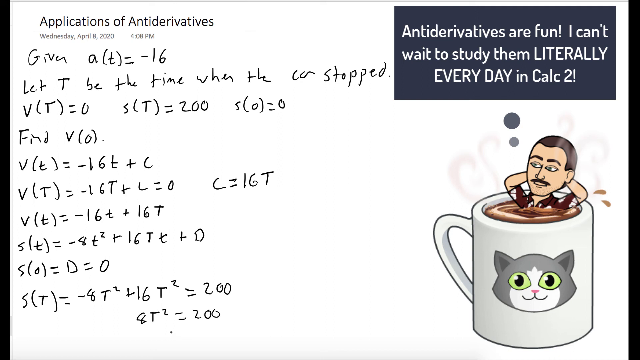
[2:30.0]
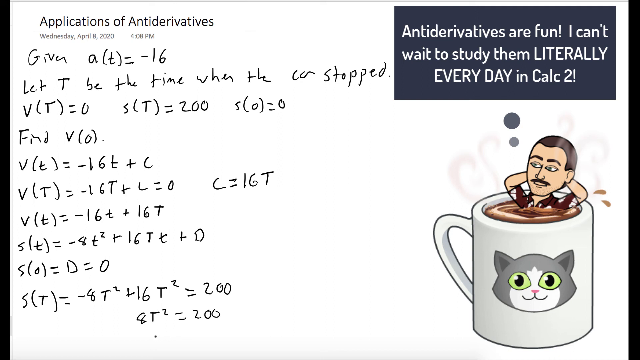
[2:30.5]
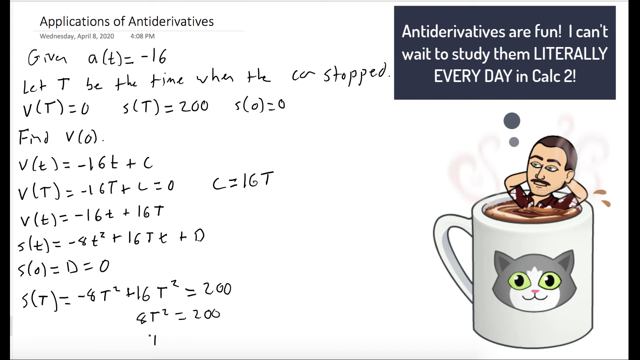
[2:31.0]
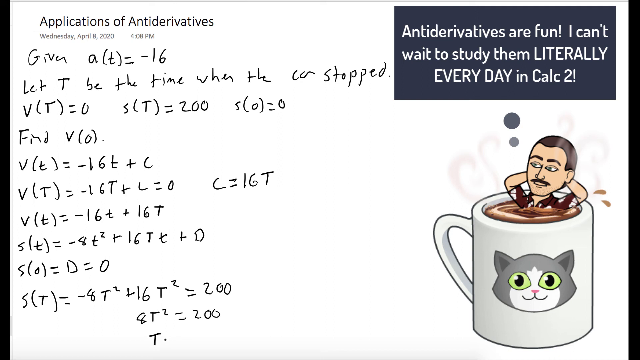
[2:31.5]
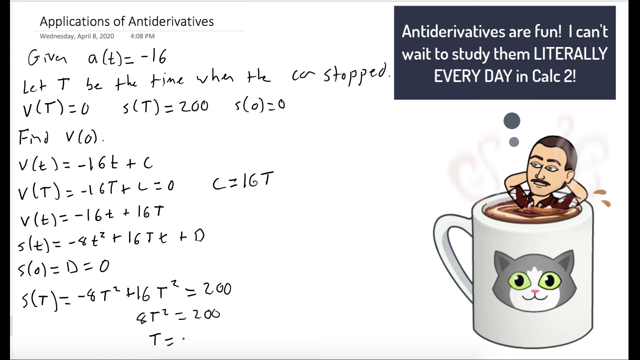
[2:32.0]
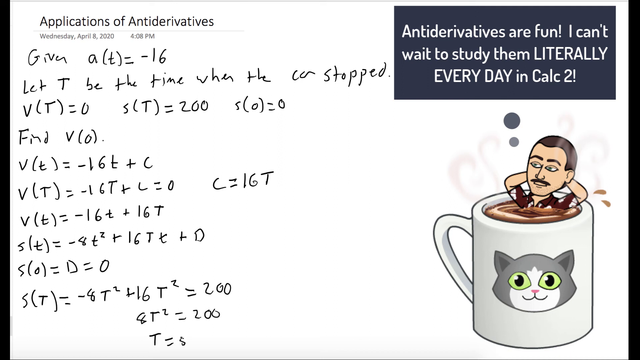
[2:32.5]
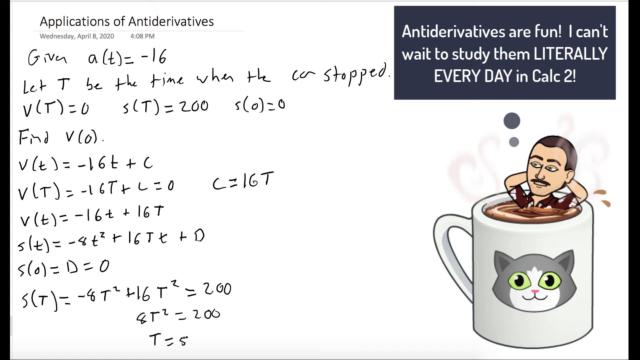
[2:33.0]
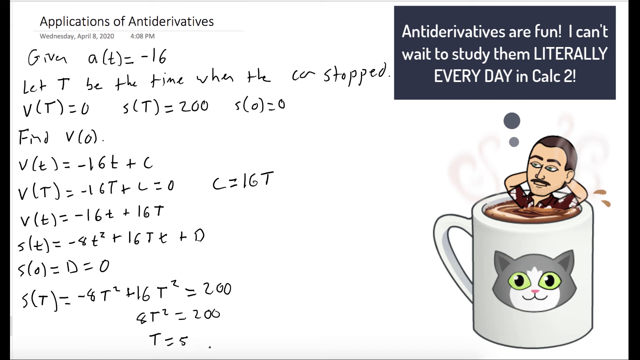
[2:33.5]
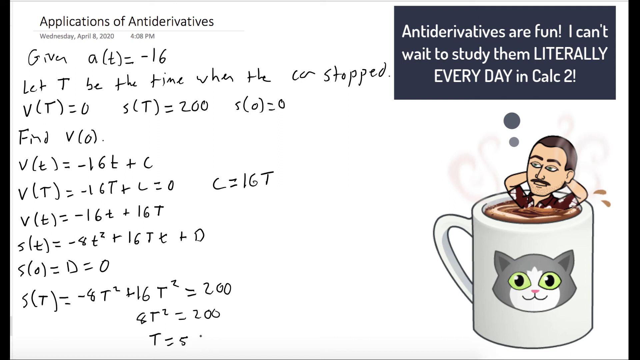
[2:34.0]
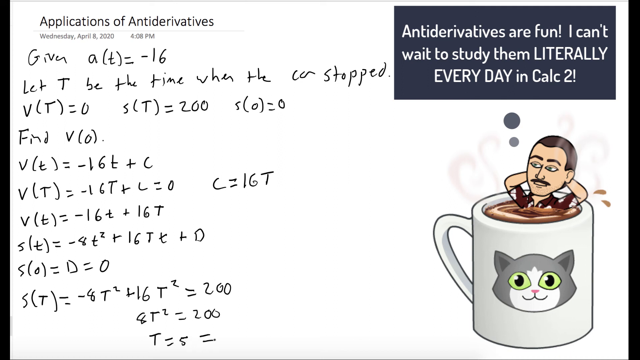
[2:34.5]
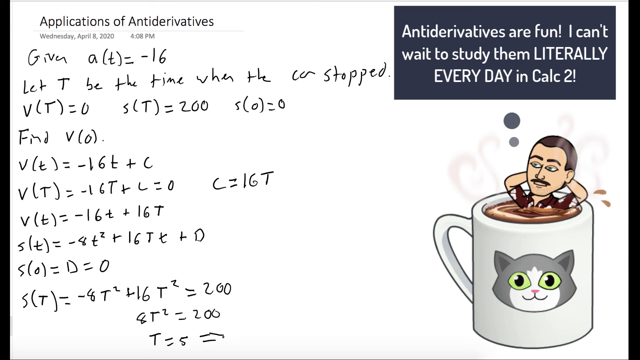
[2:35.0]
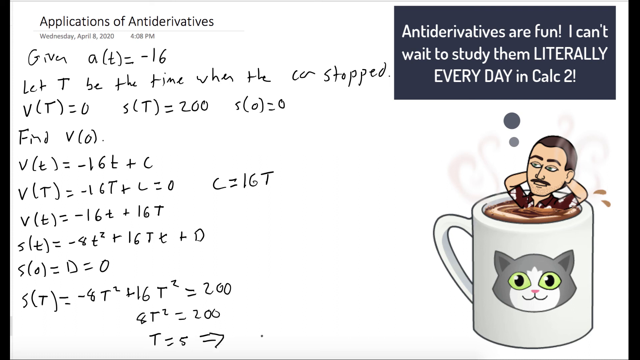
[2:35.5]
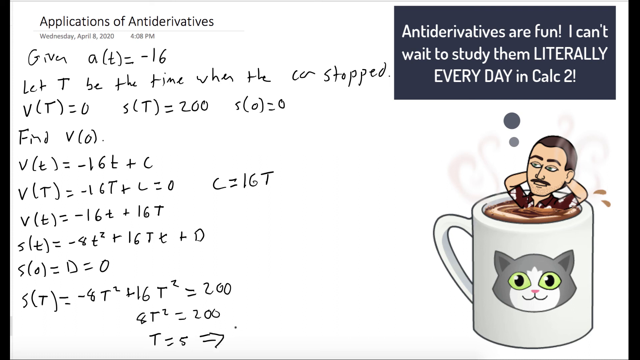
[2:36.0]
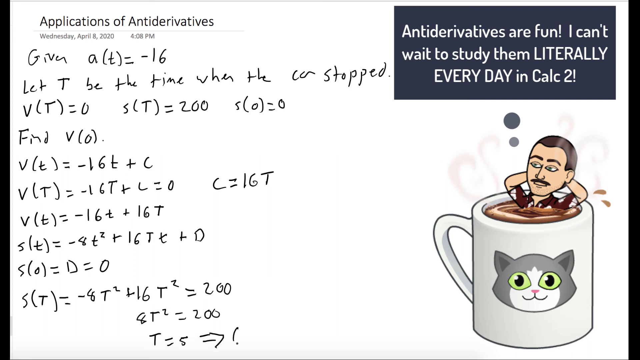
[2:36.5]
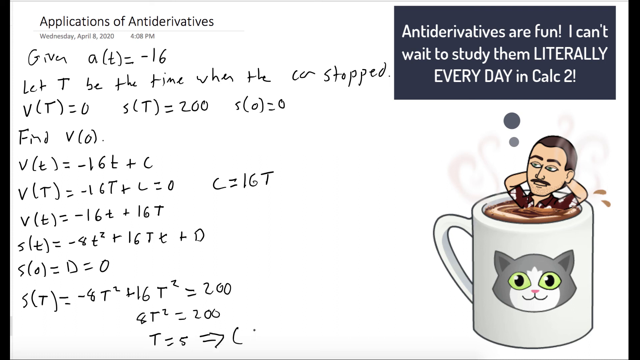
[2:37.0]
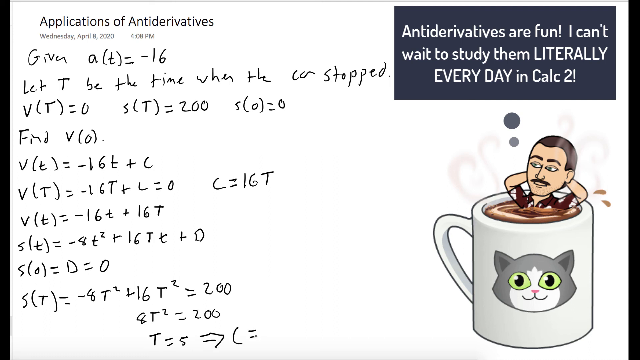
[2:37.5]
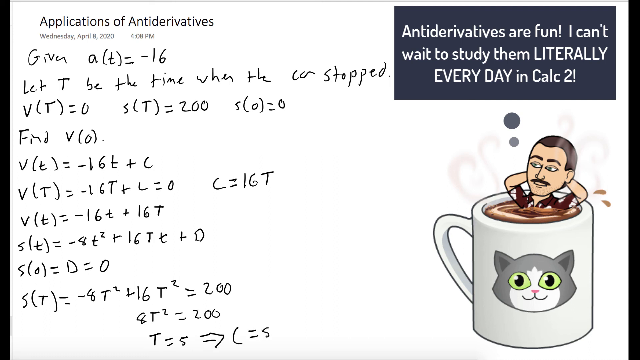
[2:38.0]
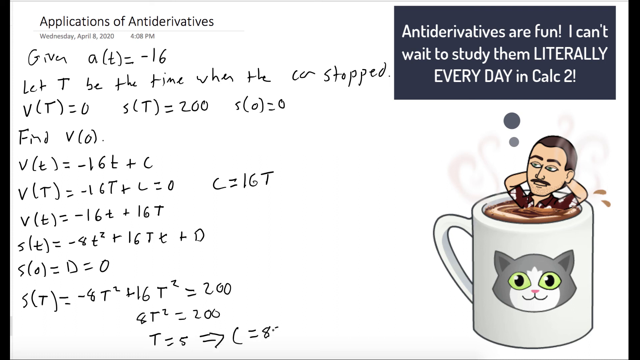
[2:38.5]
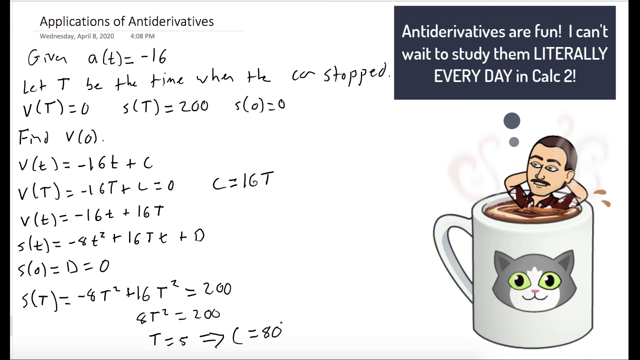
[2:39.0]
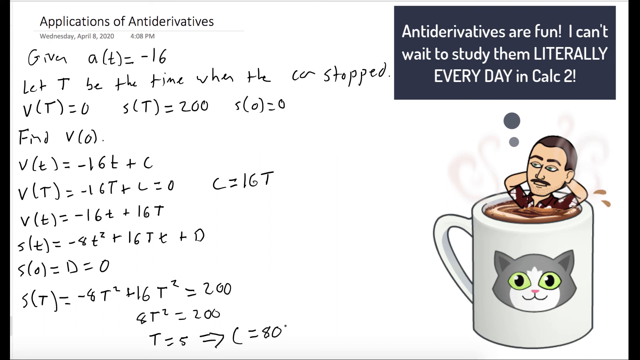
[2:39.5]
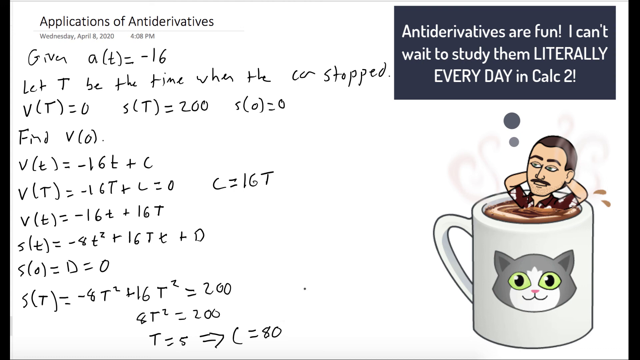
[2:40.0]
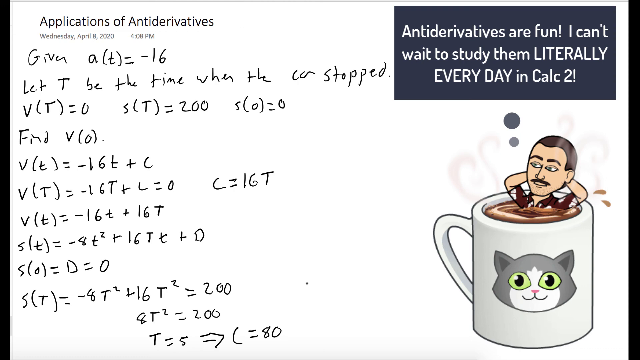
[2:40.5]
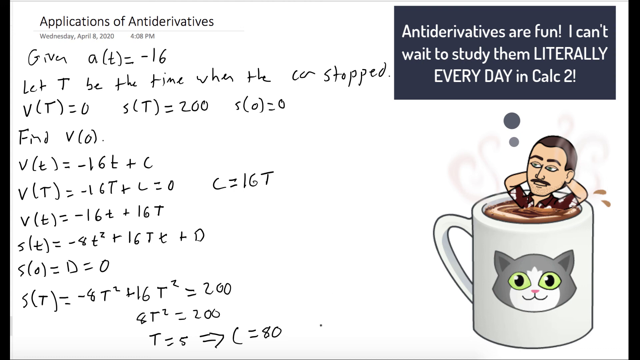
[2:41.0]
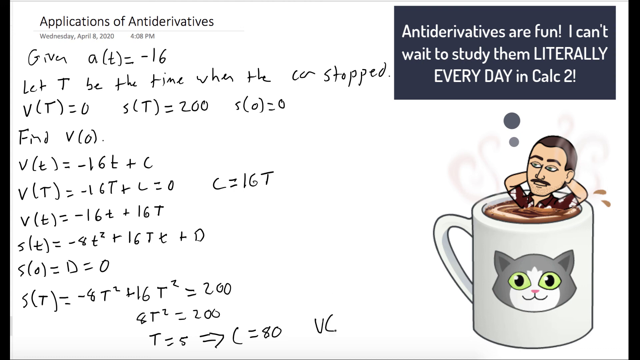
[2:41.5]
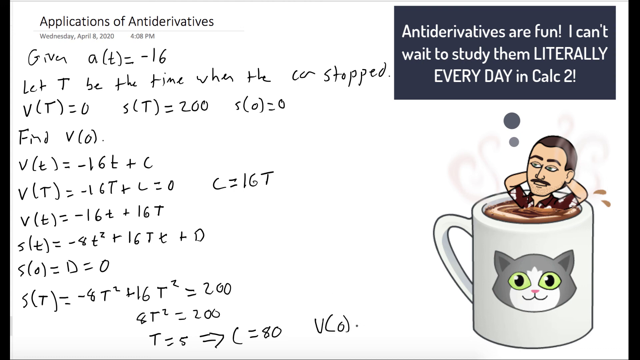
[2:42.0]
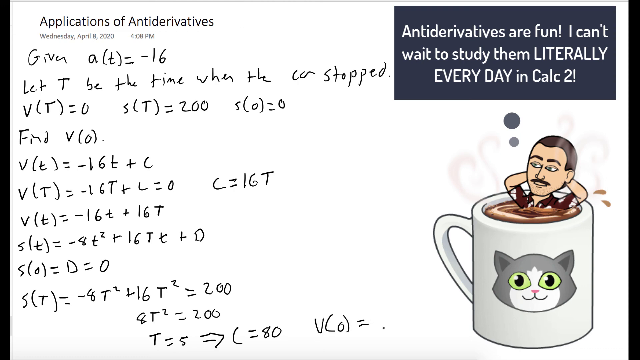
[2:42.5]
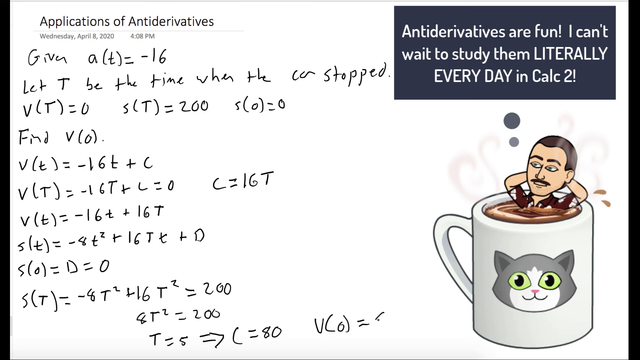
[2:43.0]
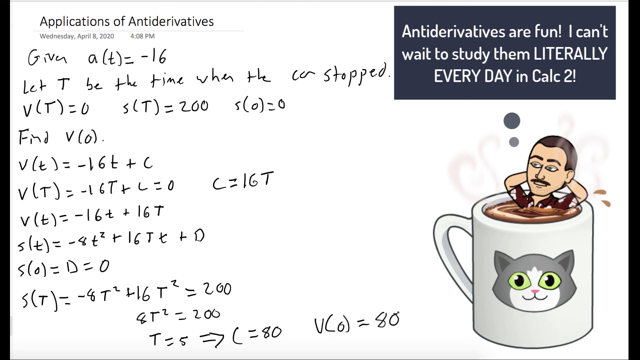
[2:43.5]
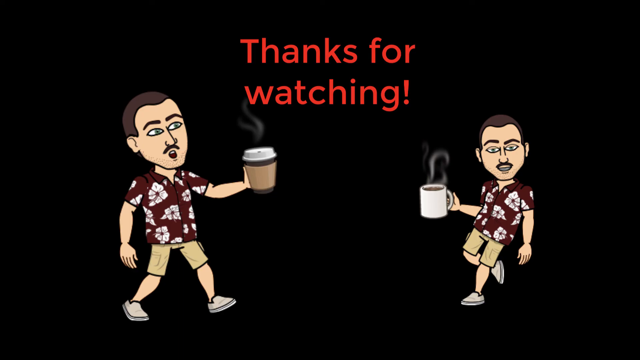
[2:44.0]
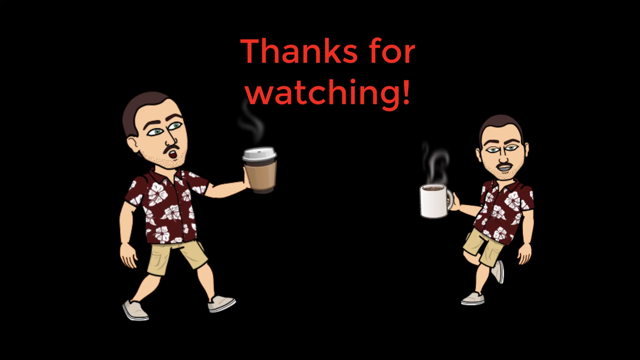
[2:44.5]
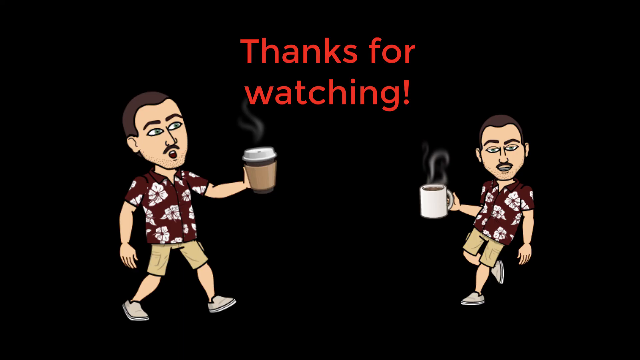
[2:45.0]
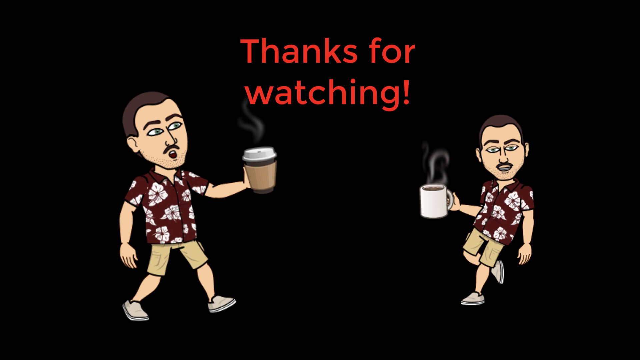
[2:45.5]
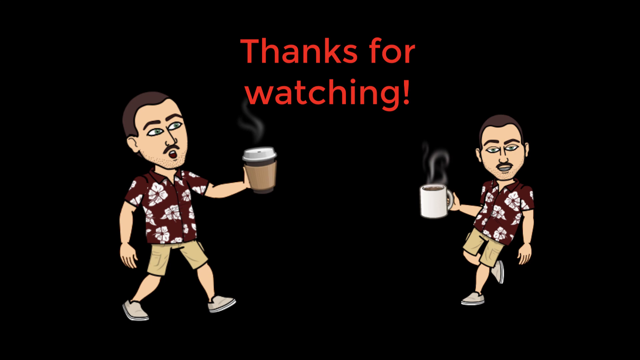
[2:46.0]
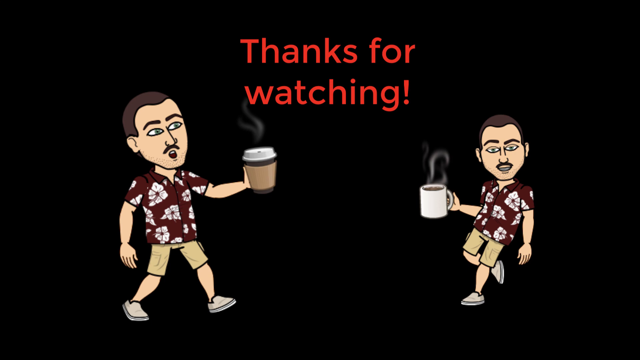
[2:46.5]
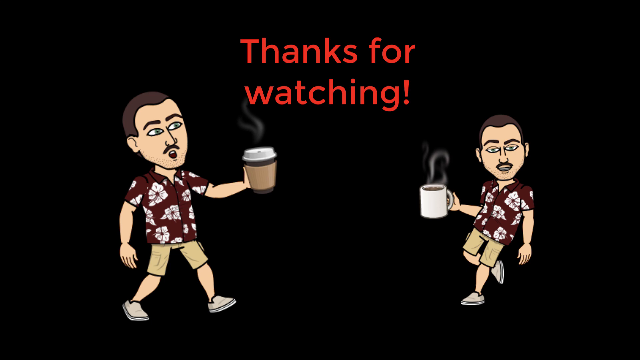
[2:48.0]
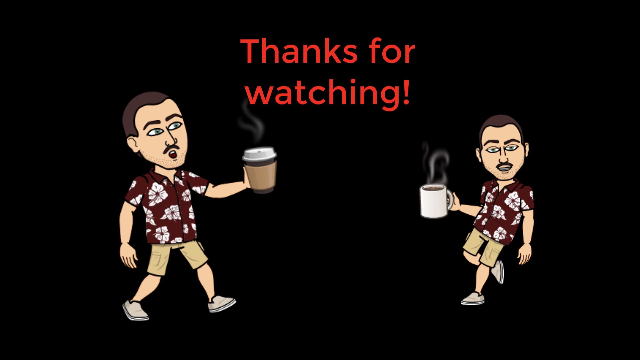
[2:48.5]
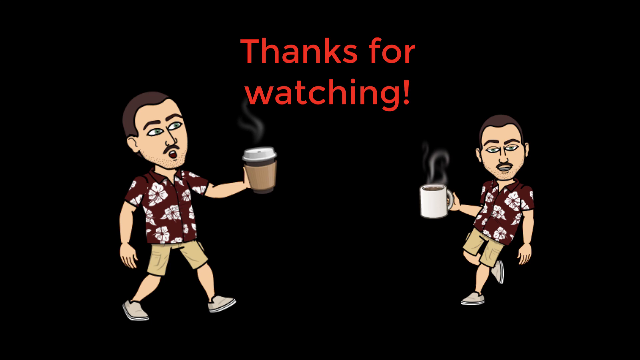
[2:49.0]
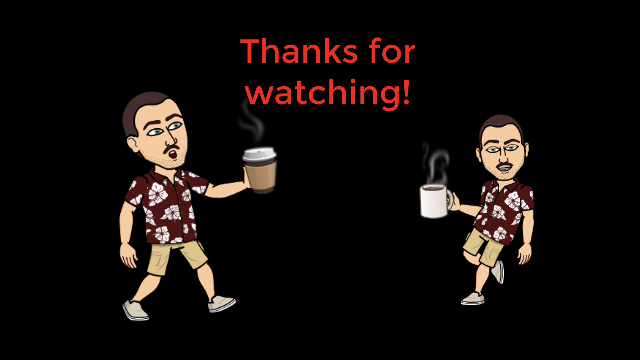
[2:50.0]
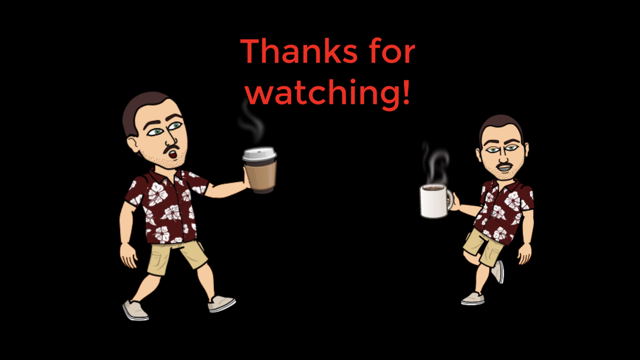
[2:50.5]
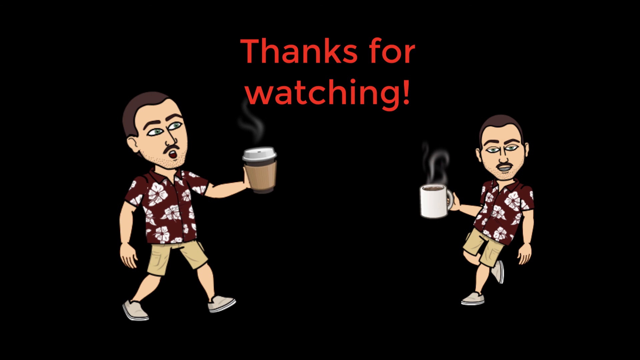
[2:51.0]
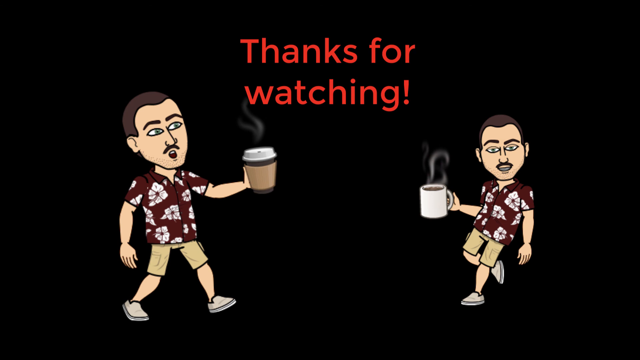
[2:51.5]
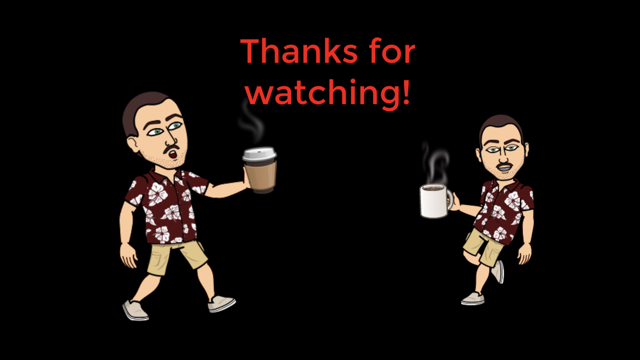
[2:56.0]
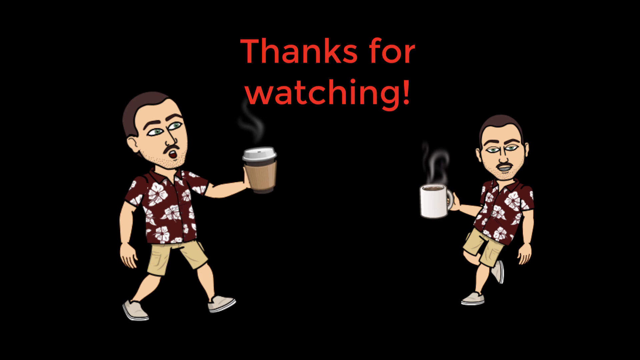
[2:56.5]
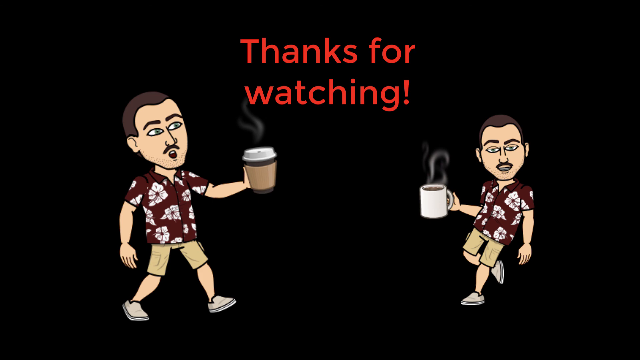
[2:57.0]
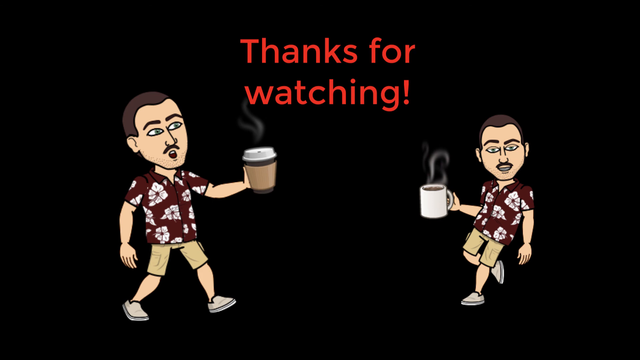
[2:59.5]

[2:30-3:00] The cursor continues to write black cursive text at the right of the page, a mathematical problem. It adds "8t squared equals 200, t equals 5." After that comes a black screen with red text at the top that says "thanks for watching." On the left and right of the screen are the same caricatures of the man making the video, holding a mug of coffee in each illustration. He is dressed in a burgundy Hawaiian shirt with beige shorts and white sneakers. In the image on the left he holds a cup of coffee in his left hand; in the image on the right he holds a mug of coffee in his right hand. Steam comes from the cups of coffee. The illustration stays static on the page until the end of the video.